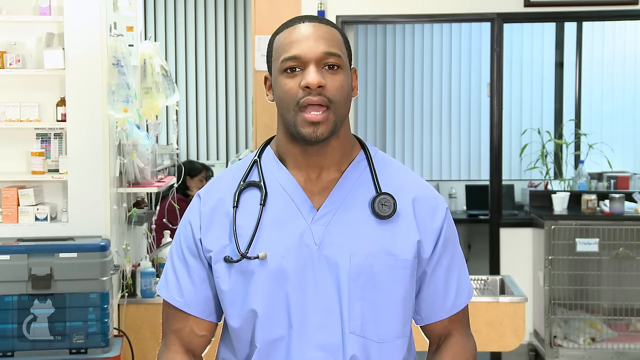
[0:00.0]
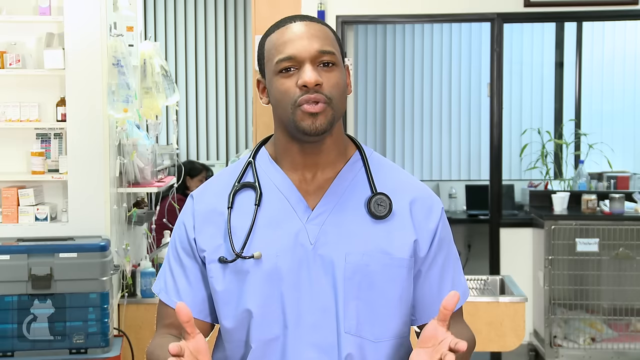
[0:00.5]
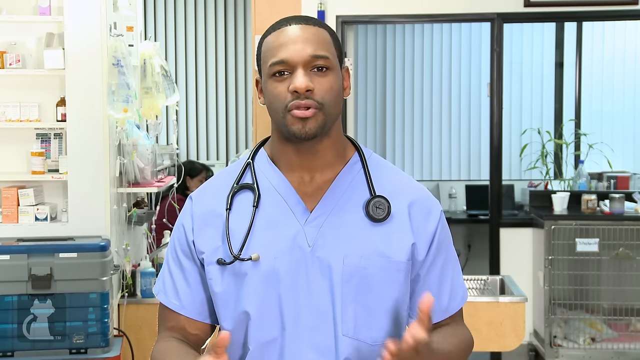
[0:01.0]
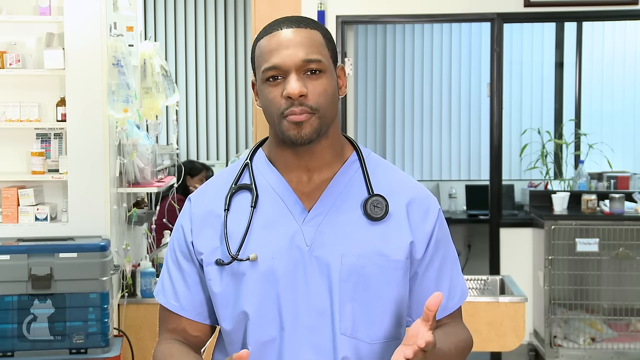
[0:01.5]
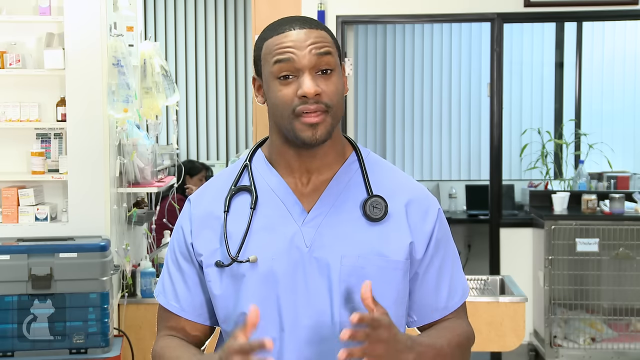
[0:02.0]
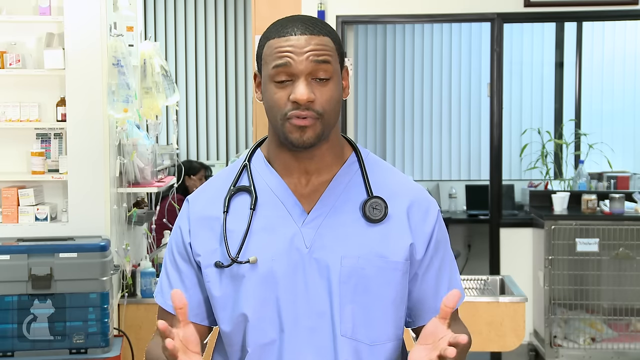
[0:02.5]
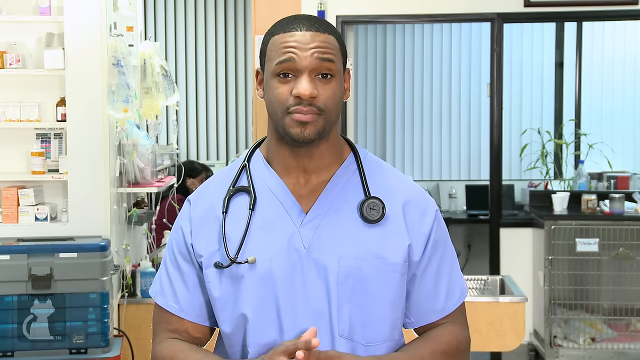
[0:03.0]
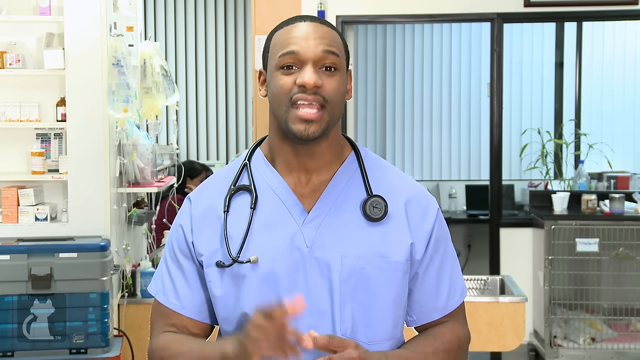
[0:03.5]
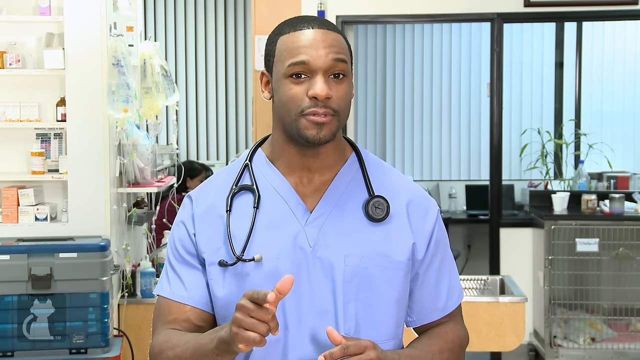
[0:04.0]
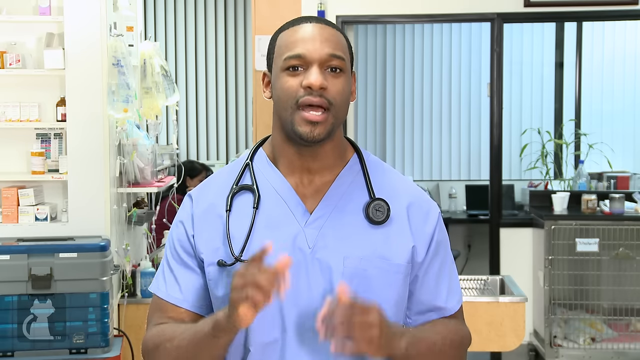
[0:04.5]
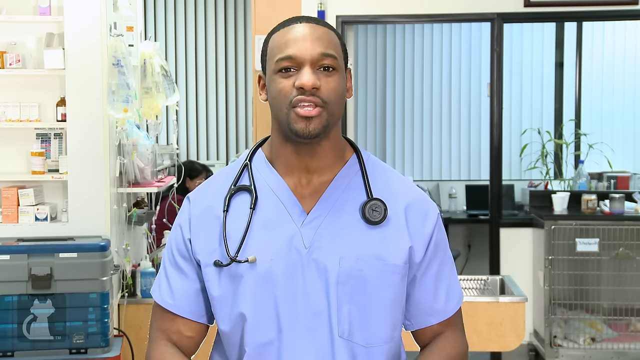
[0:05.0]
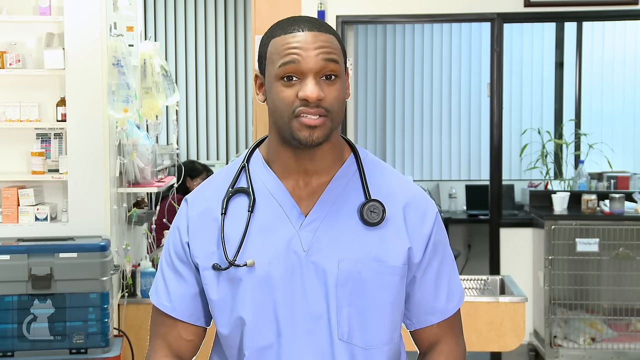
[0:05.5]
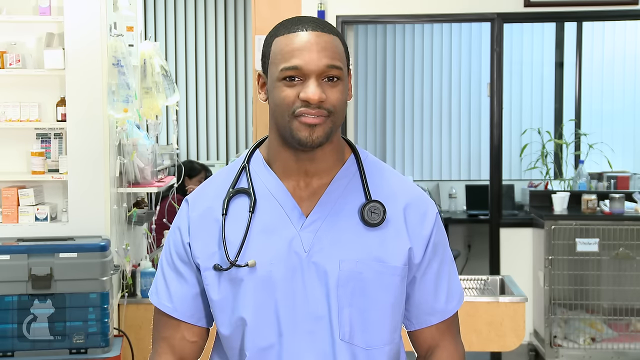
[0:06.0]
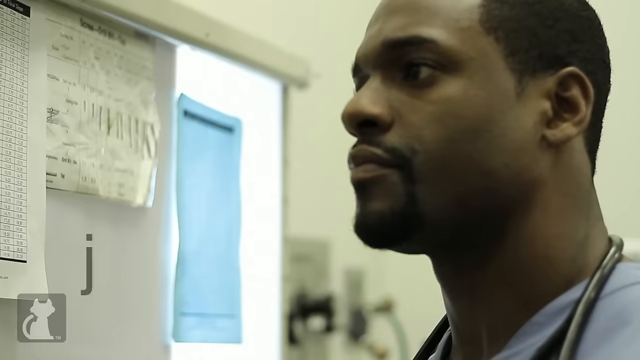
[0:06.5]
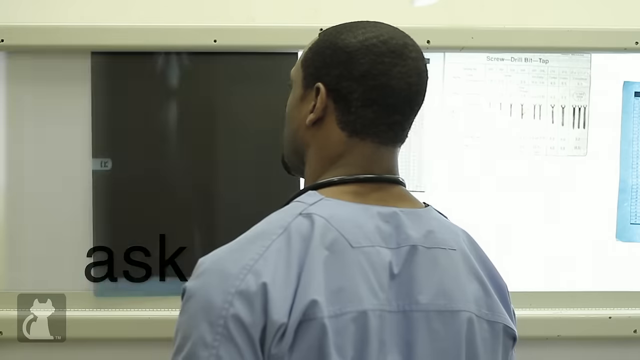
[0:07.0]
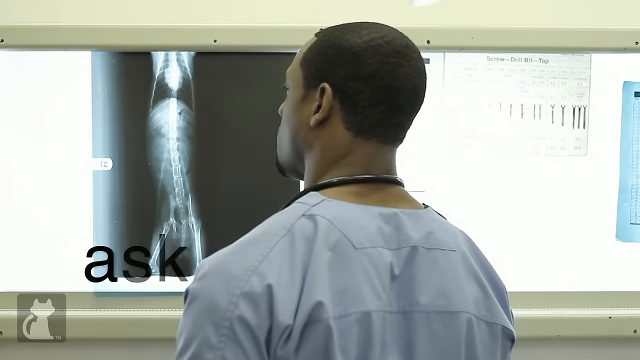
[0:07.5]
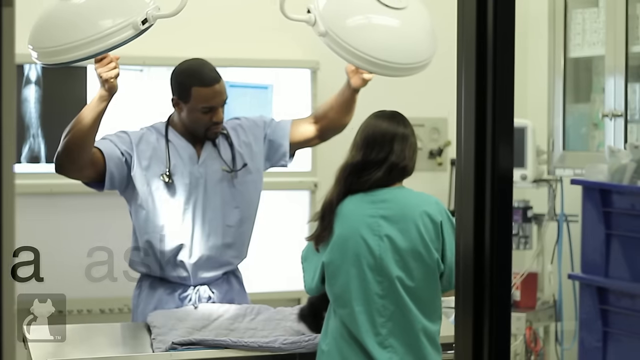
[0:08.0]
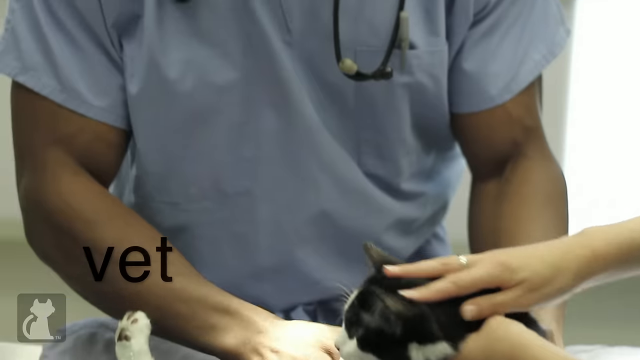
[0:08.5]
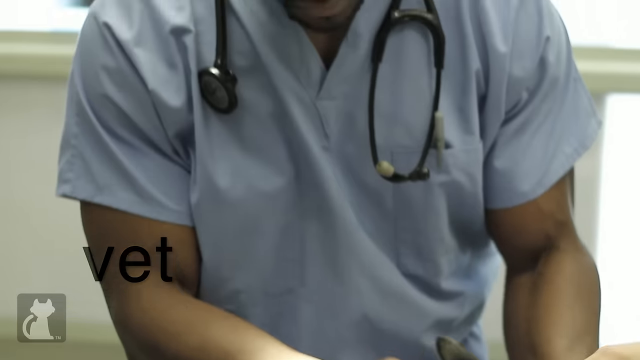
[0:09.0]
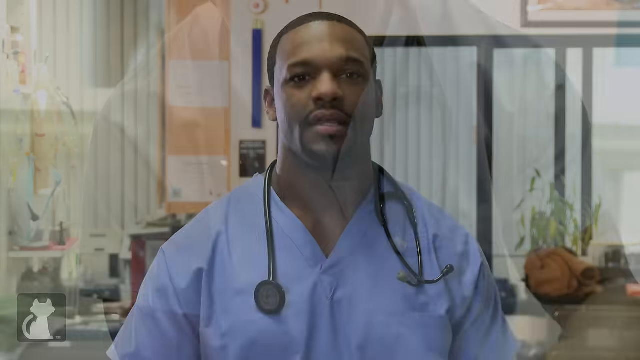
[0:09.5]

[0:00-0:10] A male medical worker wears pale blue scrubs with a V-neck and short sleeves, with a stethoscope slung around his neck. Behind him are a sliding glass doorway and drapes. He is a Black man with low-cut, well-trimmed hair and a well-trimmed beard and moustache, and he looks quite handsome. As he speaks, he furrows his brow and shakes his head. He continues speaking, gesturing with his hands and smiling slightly; he is framed from the head down to the chest. Next, he stands observing an X-ray film of an animal's leg. He is then seen with the patient, examining the patient's leg.